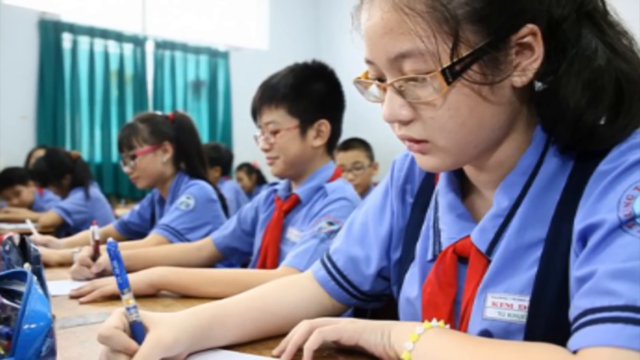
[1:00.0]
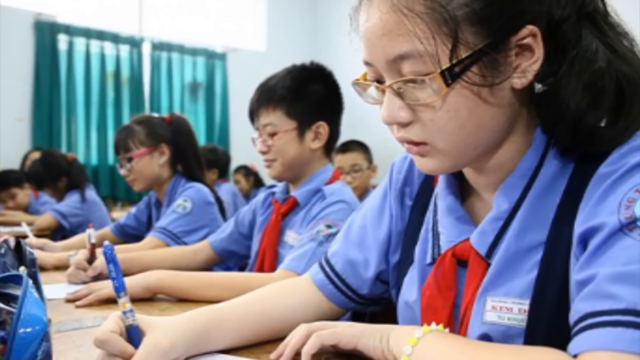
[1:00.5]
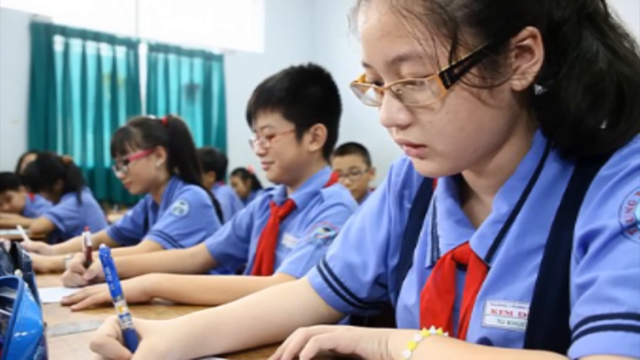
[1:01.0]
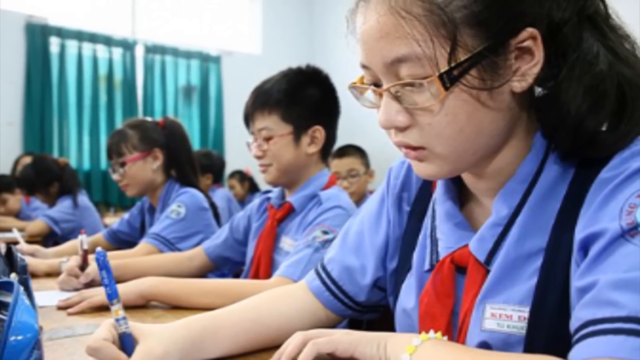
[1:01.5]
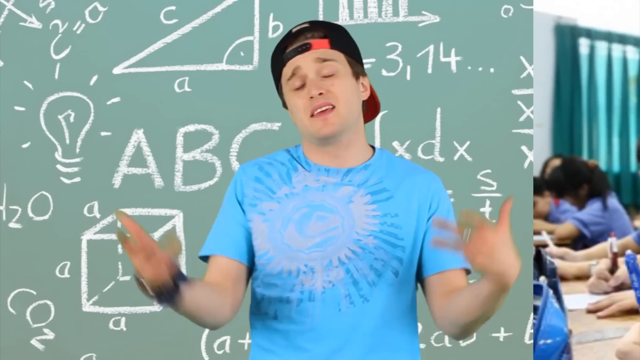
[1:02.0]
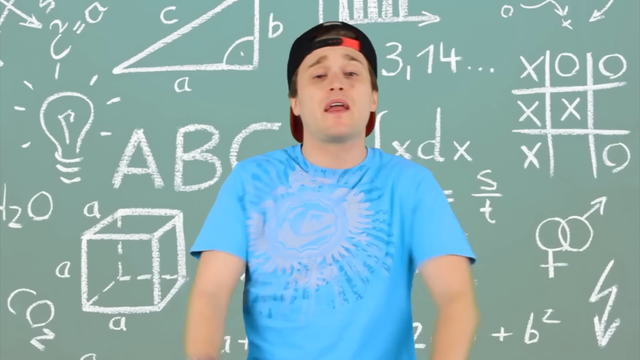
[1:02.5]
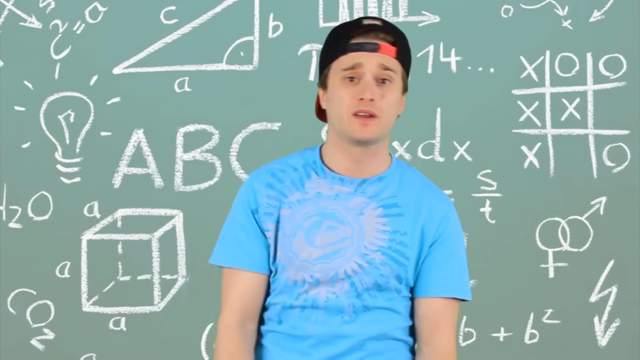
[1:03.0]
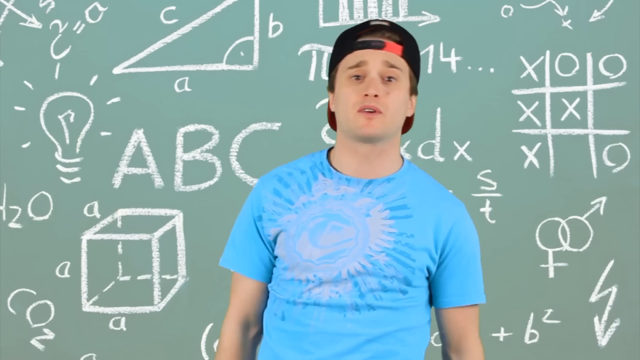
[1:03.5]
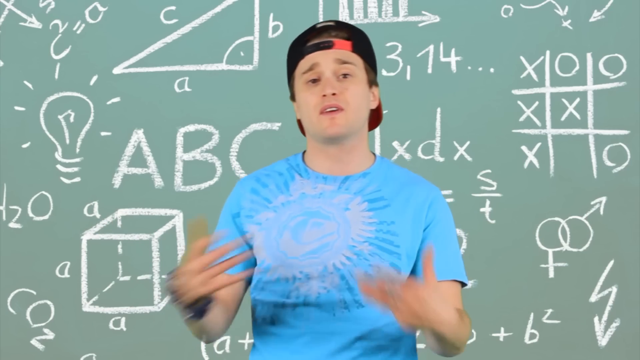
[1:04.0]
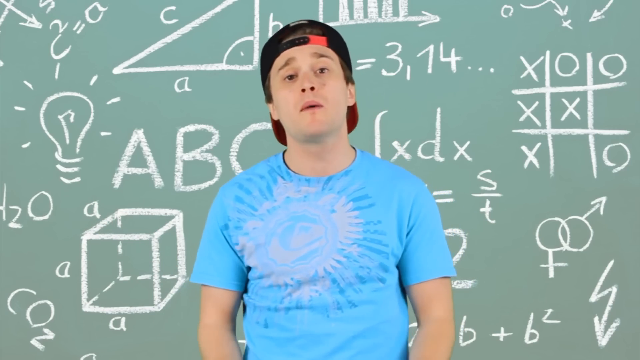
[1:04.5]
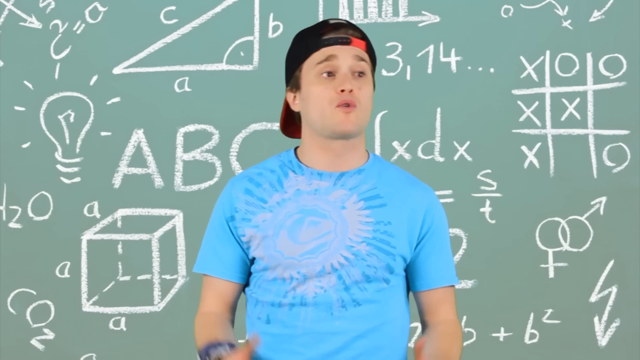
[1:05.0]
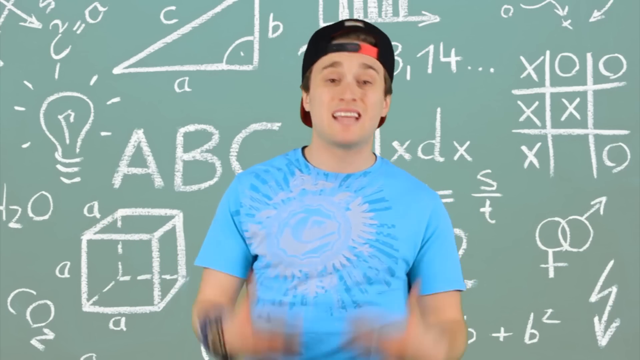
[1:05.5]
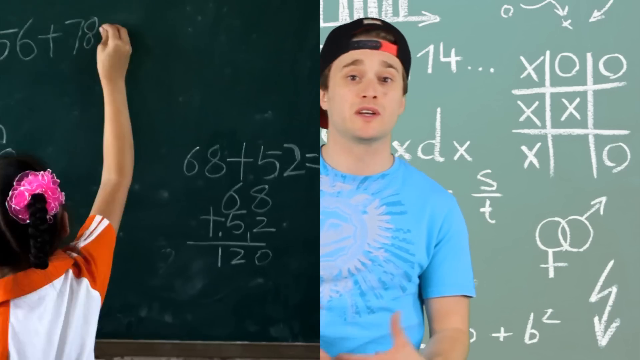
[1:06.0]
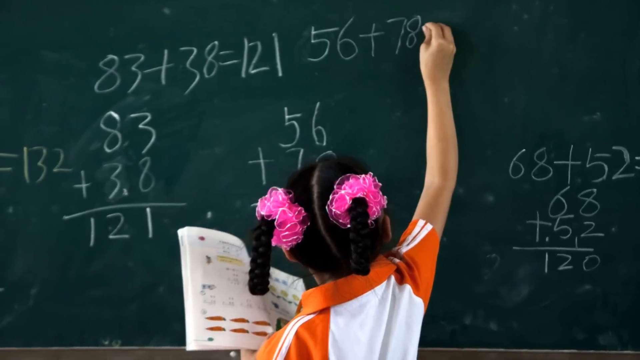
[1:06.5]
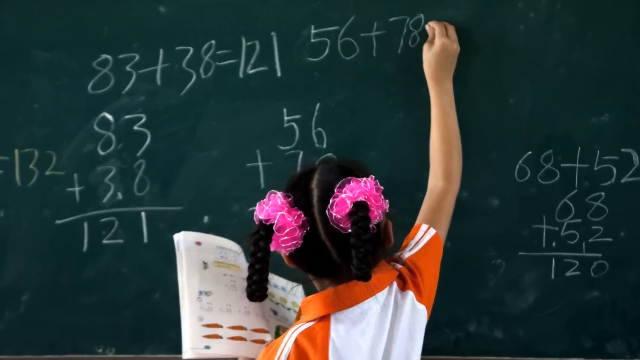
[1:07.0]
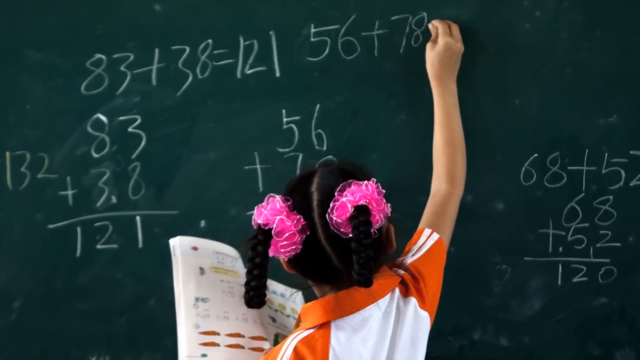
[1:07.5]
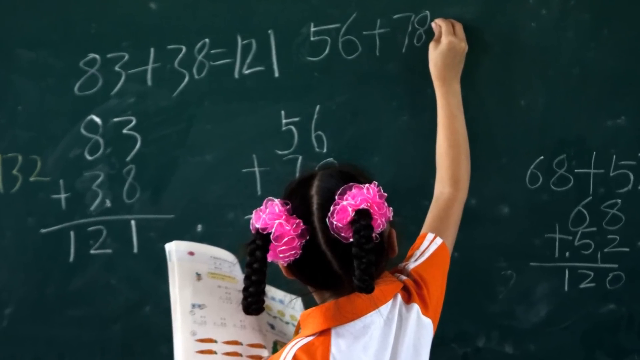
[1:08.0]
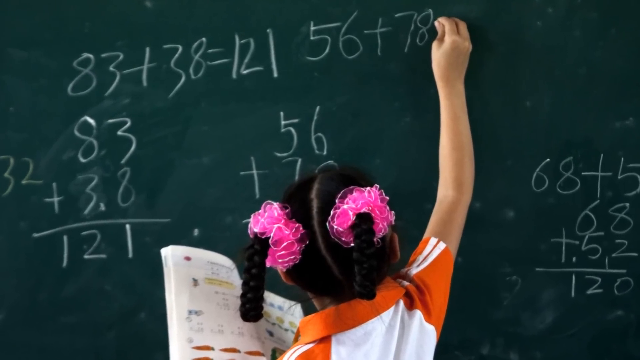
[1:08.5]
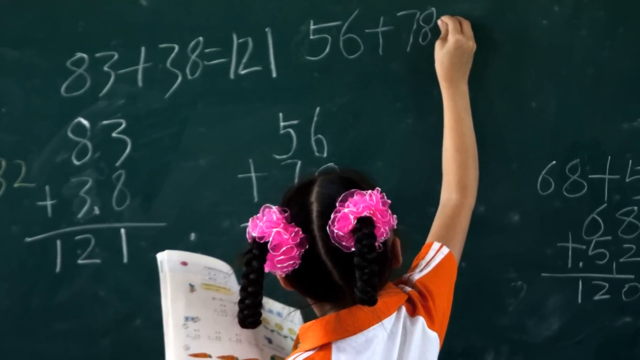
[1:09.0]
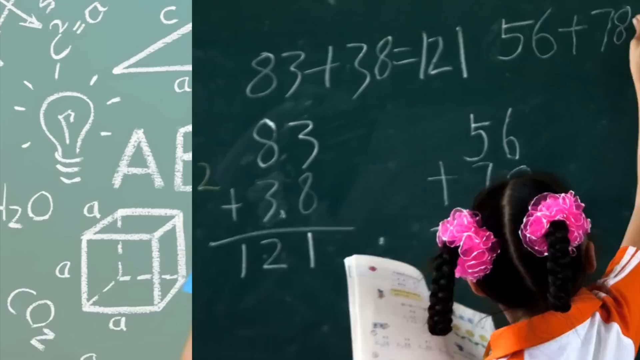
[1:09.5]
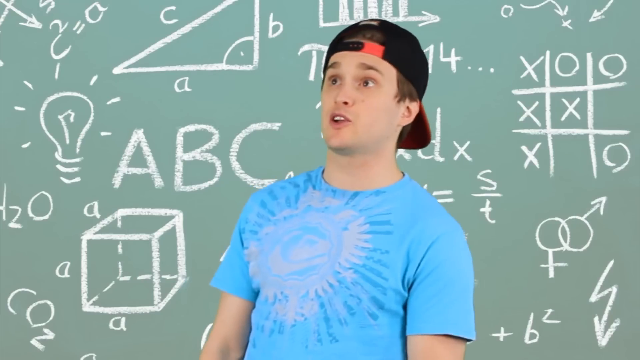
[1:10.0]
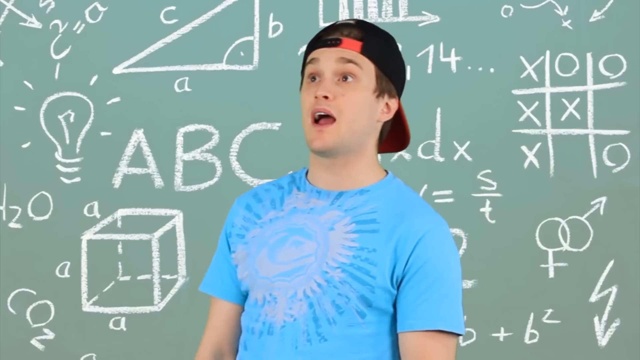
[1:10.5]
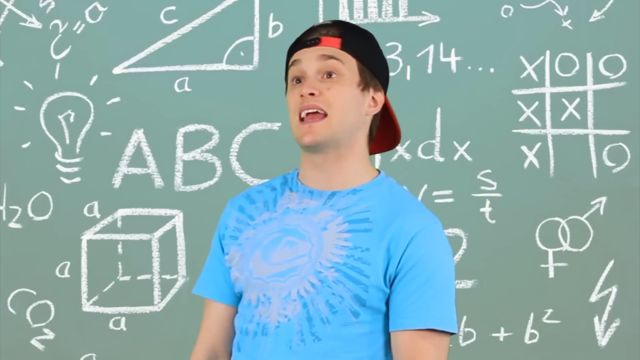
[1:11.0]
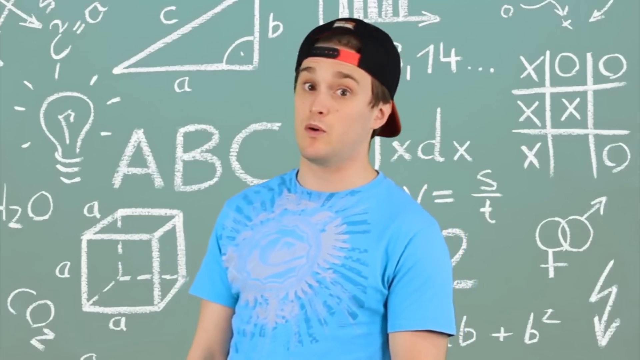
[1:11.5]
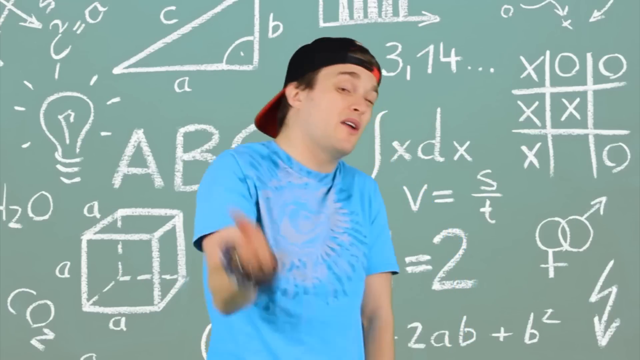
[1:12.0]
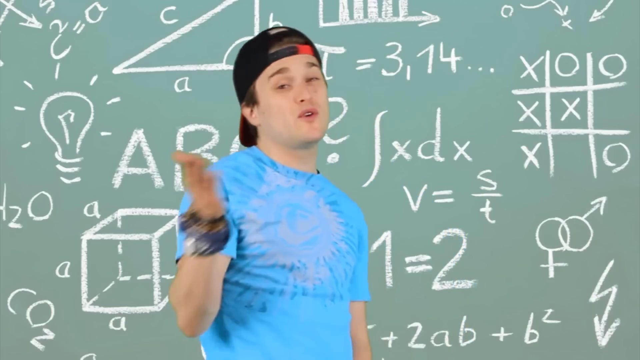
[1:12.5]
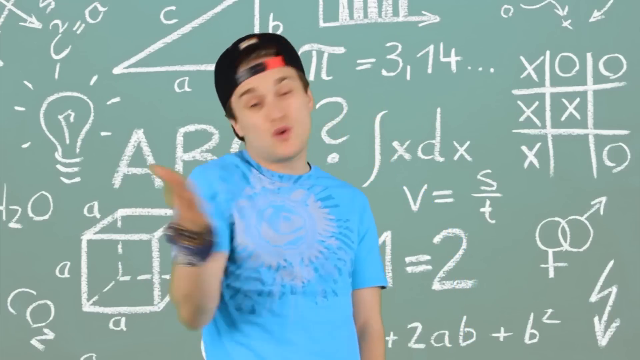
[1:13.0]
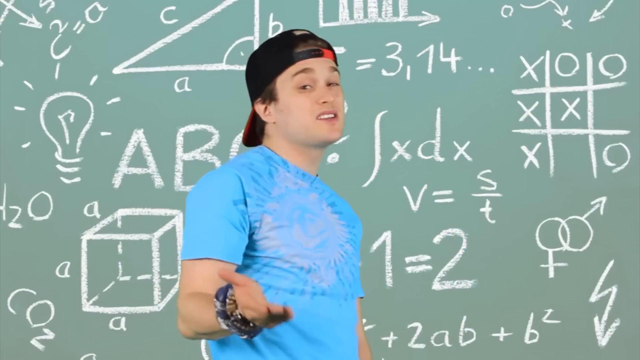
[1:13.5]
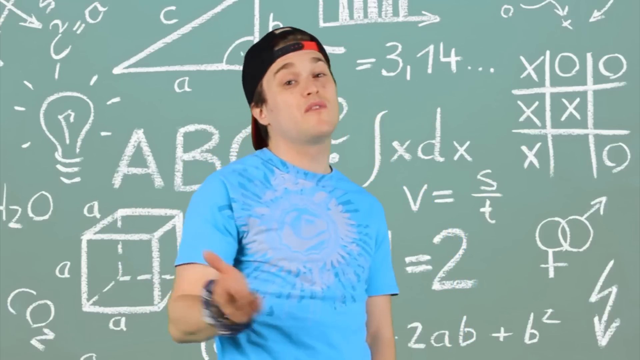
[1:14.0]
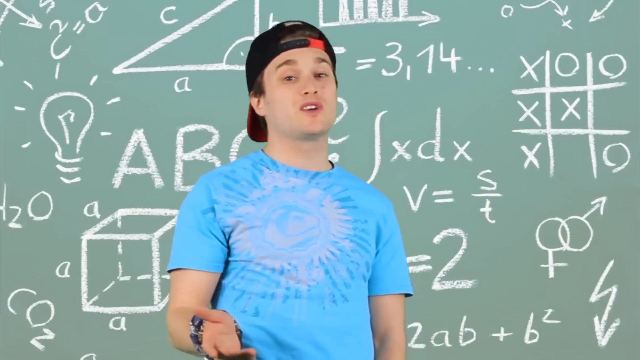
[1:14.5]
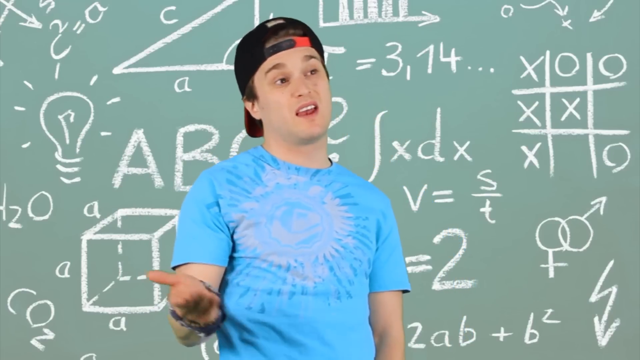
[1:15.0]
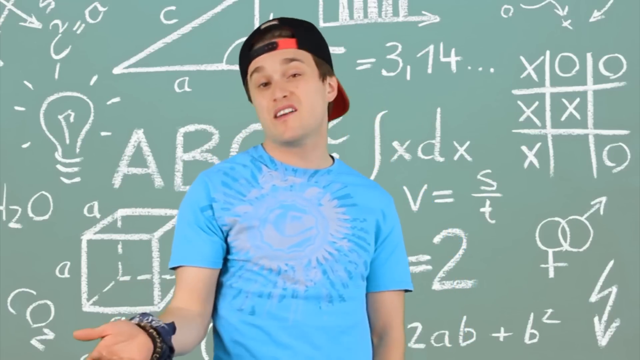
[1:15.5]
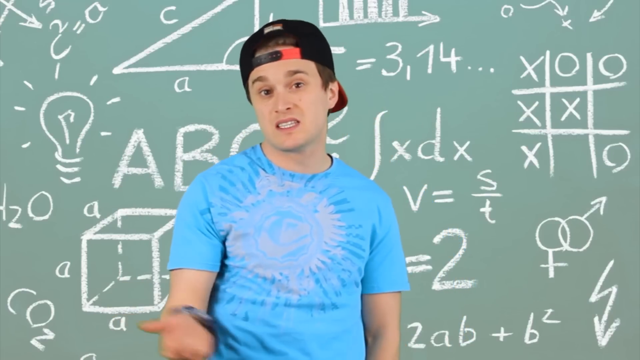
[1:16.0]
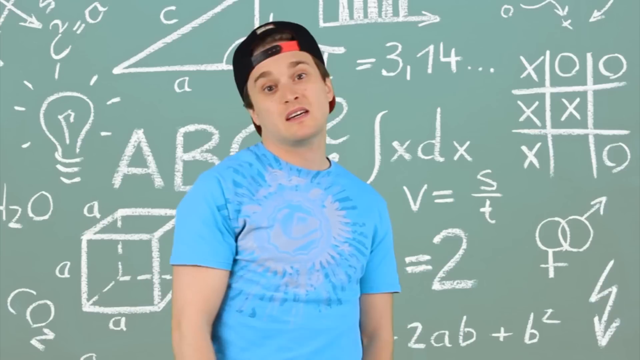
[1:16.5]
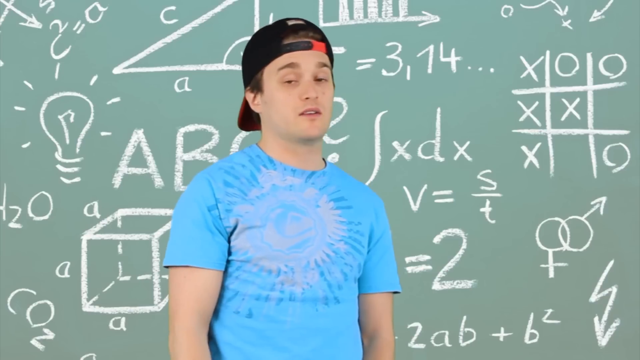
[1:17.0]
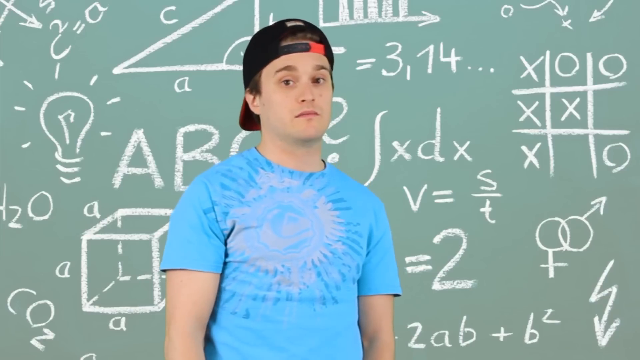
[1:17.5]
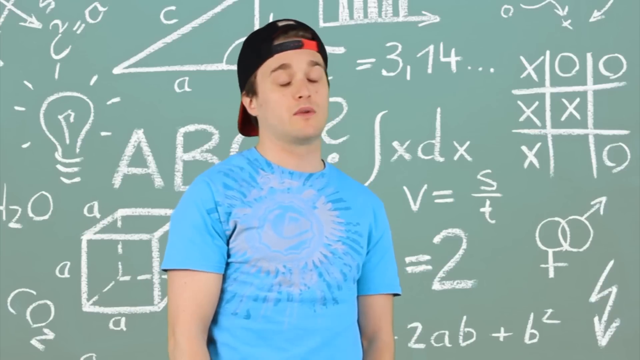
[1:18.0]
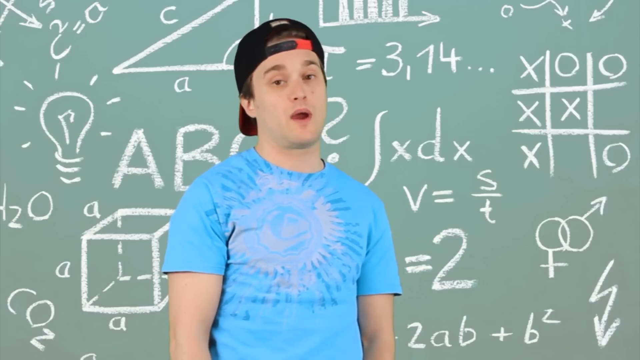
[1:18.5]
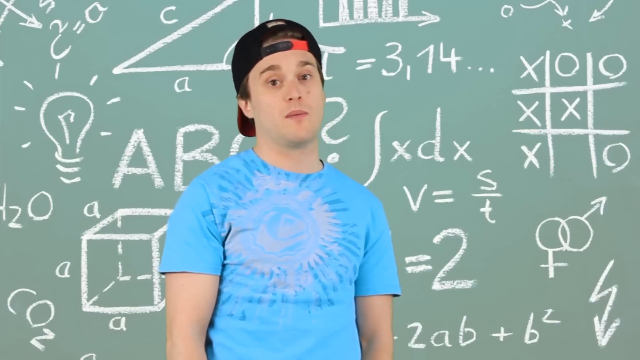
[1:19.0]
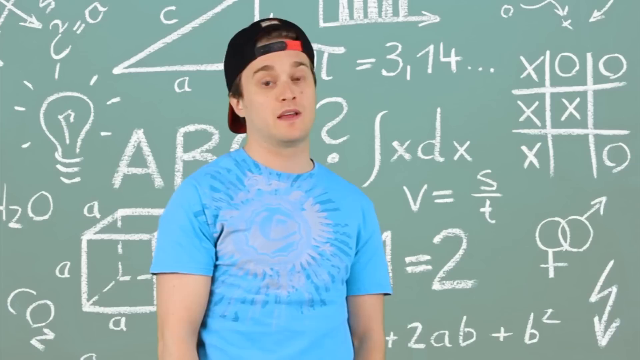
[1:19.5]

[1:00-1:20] Asian students in a classroom look at screens; they wear school uniforms with red ties. The camera slowly zooms into the face of a girl. It cuts back to the young man in his blue t-shirt and back-to-front baseball hat, talking to the camera and gesticulating quite a lot. Next, a girl with pink ribbons in her hair draws numbers on a blackboard. The video returns to the young man talking to the camera, gesticulating again and looking like he knows everything.